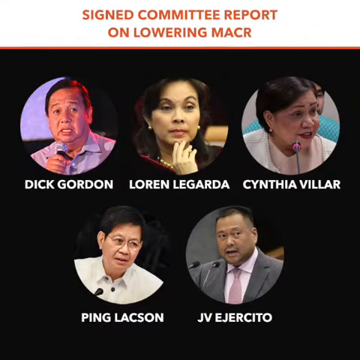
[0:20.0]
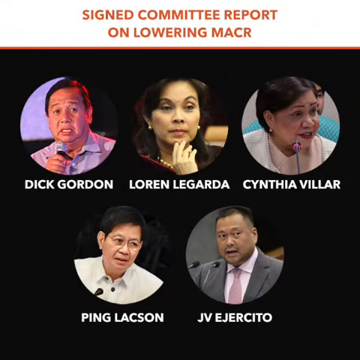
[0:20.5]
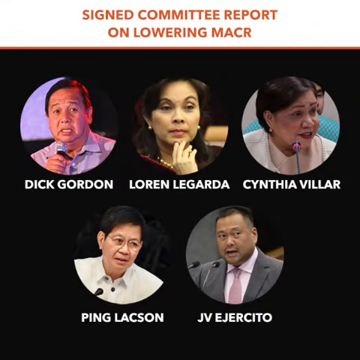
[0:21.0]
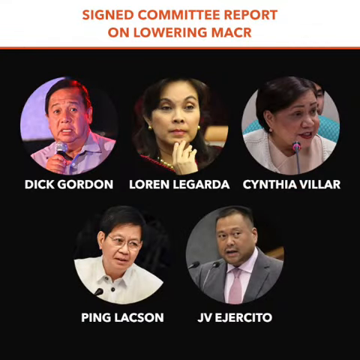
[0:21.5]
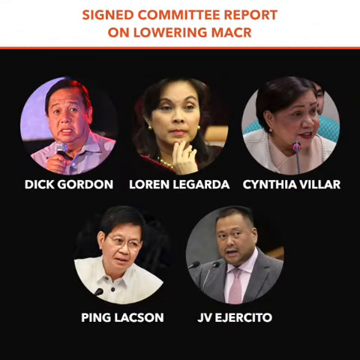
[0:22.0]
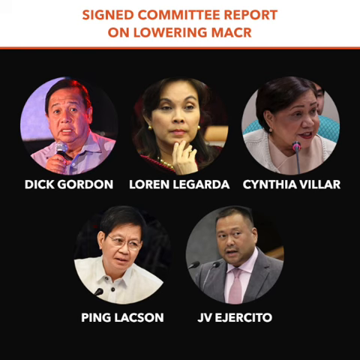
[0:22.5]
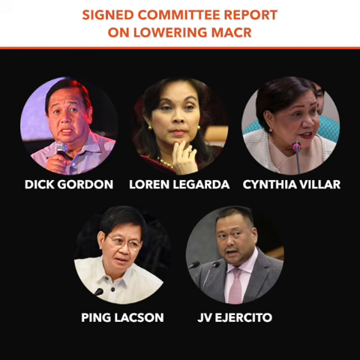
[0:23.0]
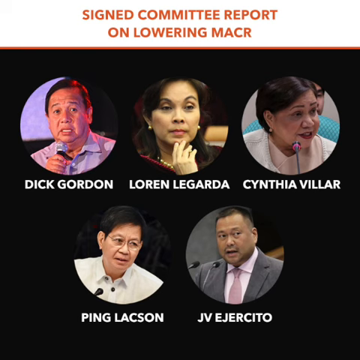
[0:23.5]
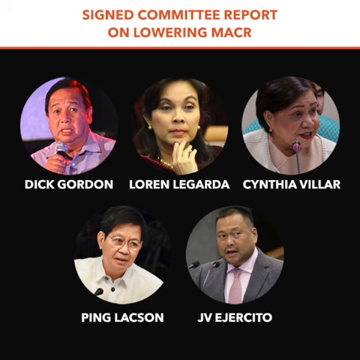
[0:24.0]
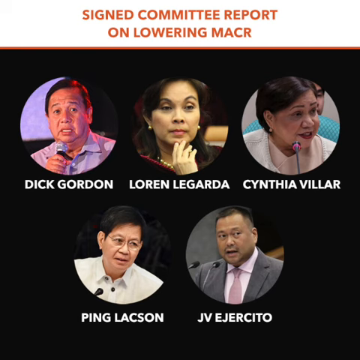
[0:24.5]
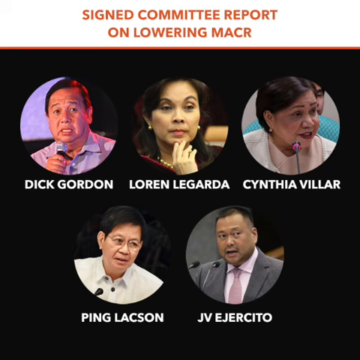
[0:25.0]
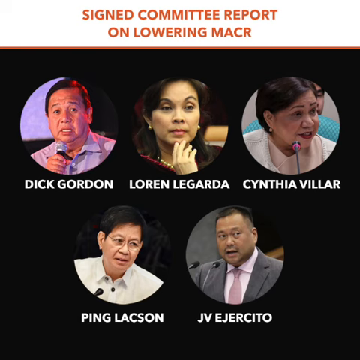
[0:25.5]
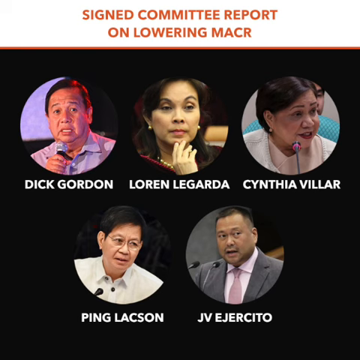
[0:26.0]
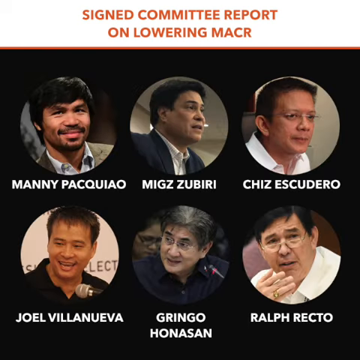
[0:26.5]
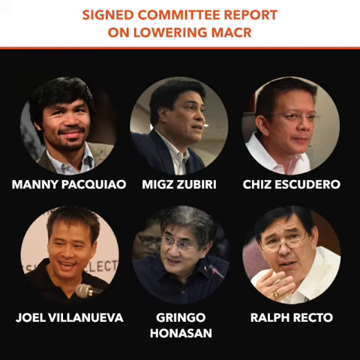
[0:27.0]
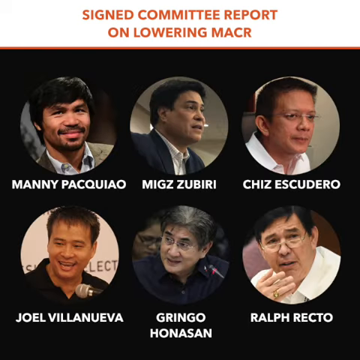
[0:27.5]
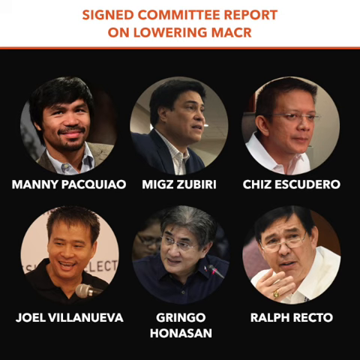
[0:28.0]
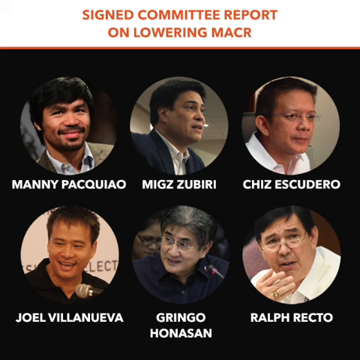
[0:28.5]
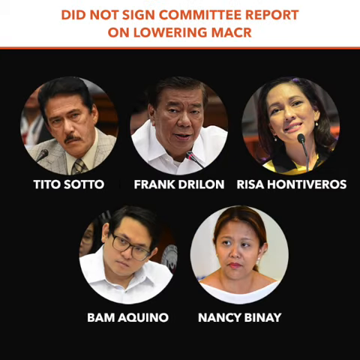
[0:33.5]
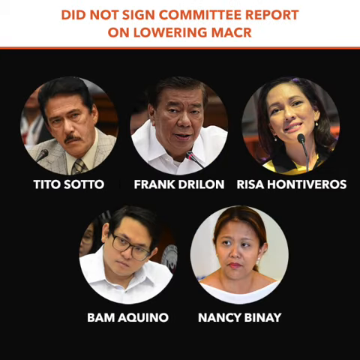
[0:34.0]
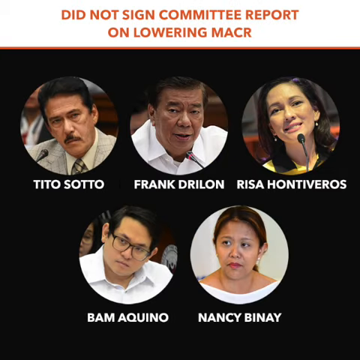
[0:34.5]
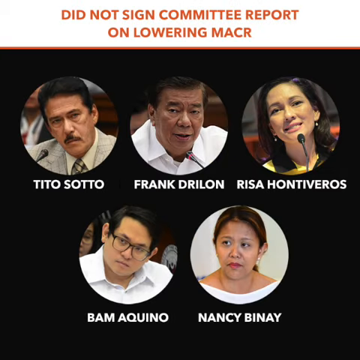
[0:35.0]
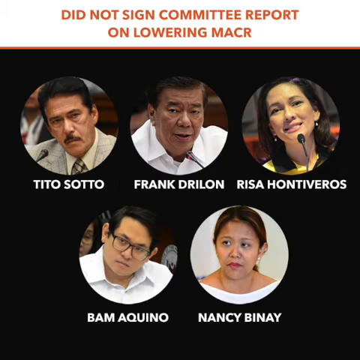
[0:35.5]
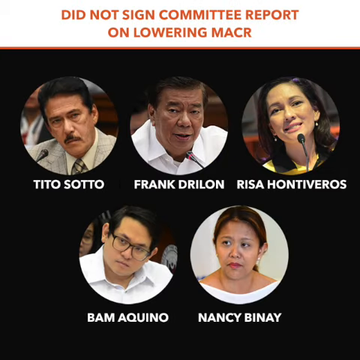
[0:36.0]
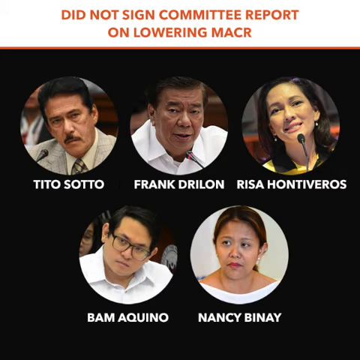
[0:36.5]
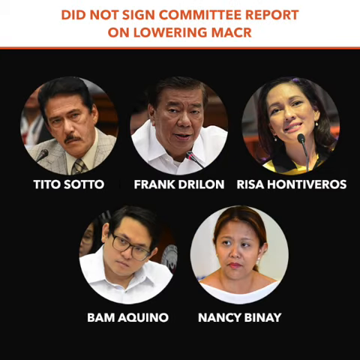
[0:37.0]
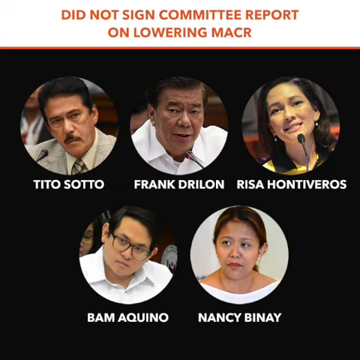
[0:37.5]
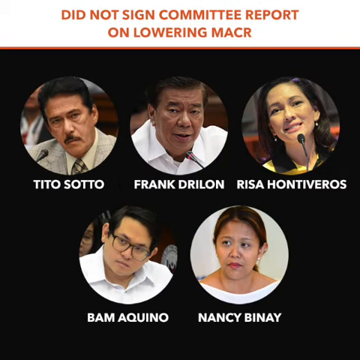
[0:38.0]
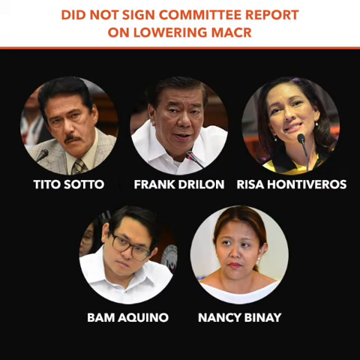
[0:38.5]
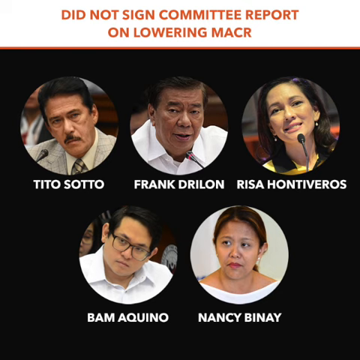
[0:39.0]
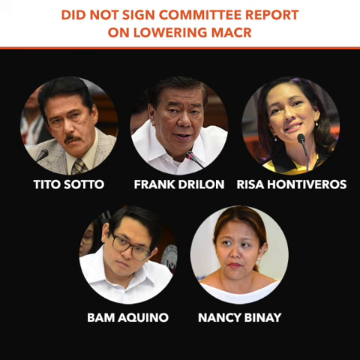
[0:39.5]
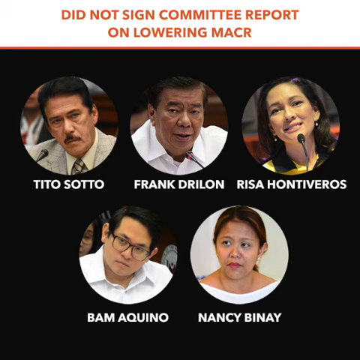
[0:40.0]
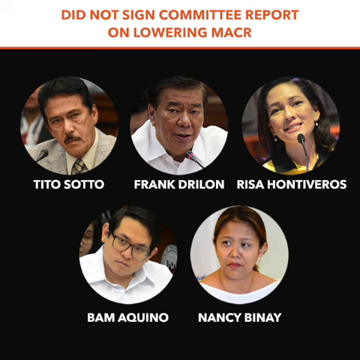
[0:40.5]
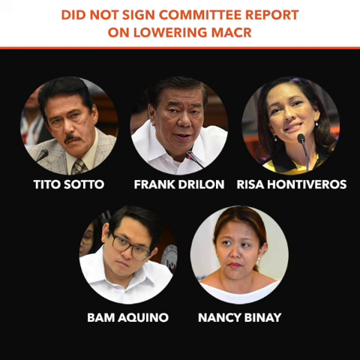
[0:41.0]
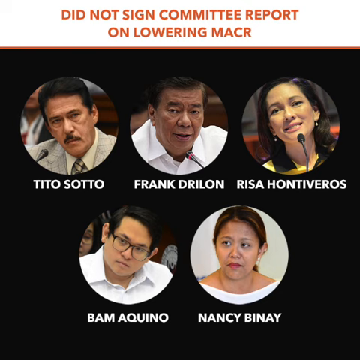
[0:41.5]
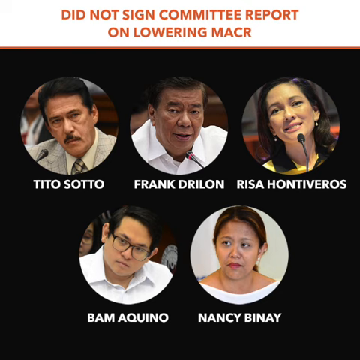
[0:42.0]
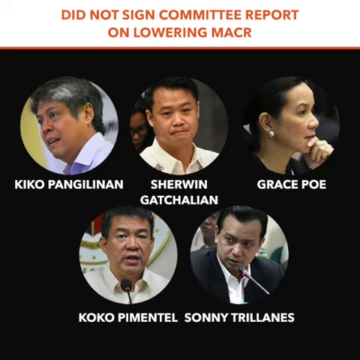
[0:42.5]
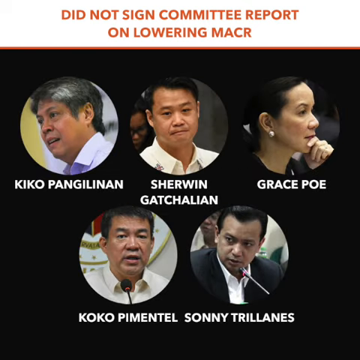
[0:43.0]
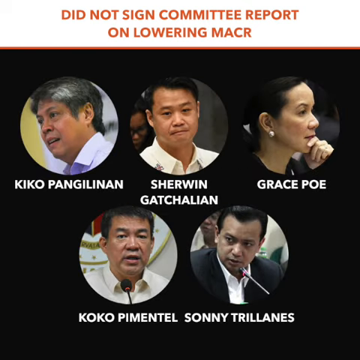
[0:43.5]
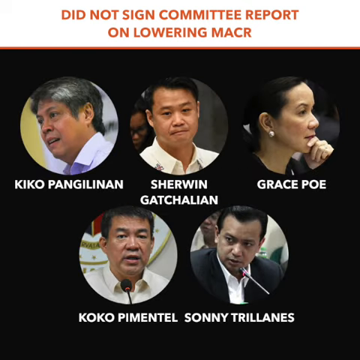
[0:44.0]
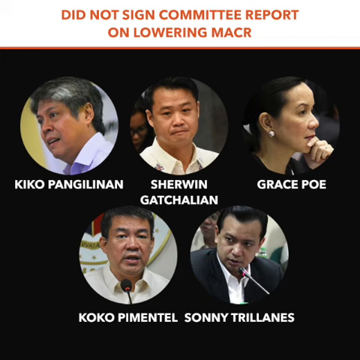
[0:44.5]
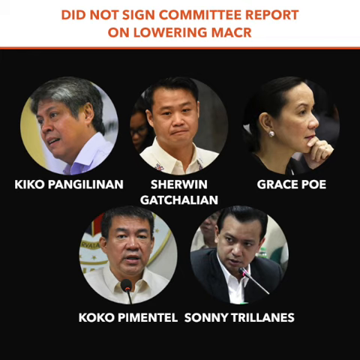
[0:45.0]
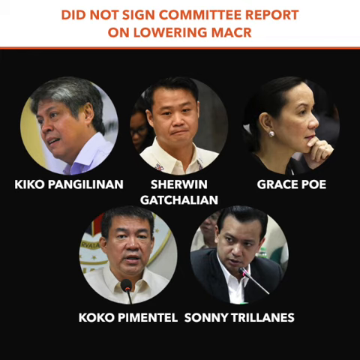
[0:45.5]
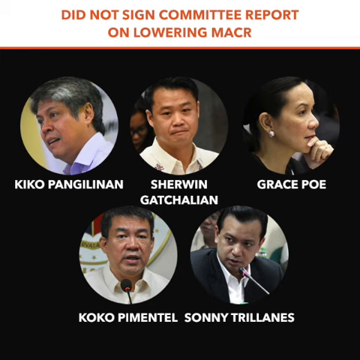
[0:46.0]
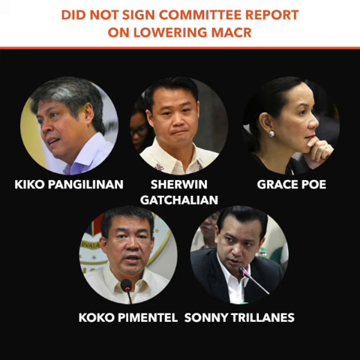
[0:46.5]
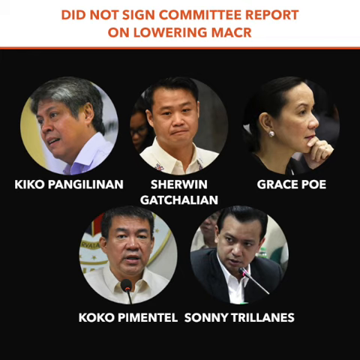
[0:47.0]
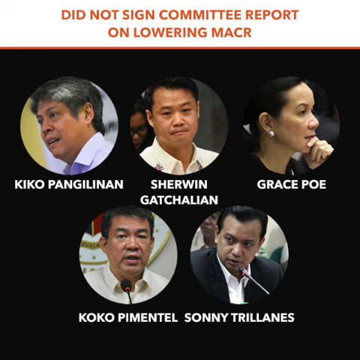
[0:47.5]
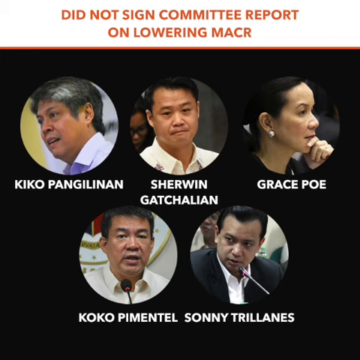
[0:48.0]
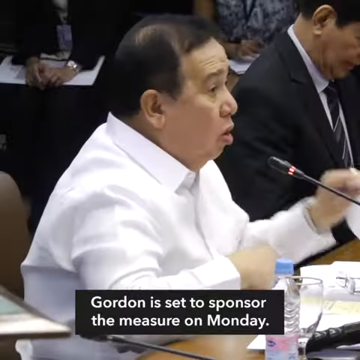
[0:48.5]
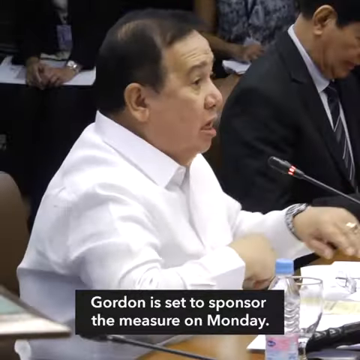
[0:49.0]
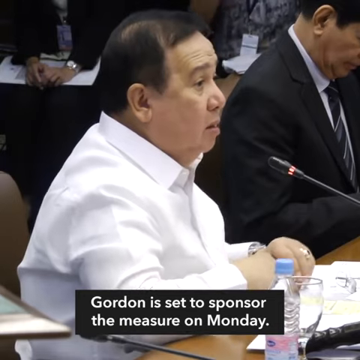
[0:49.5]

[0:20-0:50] The screen shows the signed committee report on lowering MACR with five people, then switches to another screen with the same title at the top, "signed committee report on lowering MACR," showing six different people on a black background. Each person's image is in a circle showing their head and upper body, with their name below it. Another section then shows five more people, but the title at the top is different: "did not sign committee report on lowering MACR." These five people are also in circles with their names below. It then switches to another screen showing five more people with the same title at the top and the black background. The title area at the top has a white bar background with an orange outline along its bottom separating the white background from the black background, and the title text is orange as well. At the very end, the screen switches to a video of a man speaking into a microphone at one of the desks. He looks to the right, and the camera is kind of at his side. He moves papers around as he speaks.